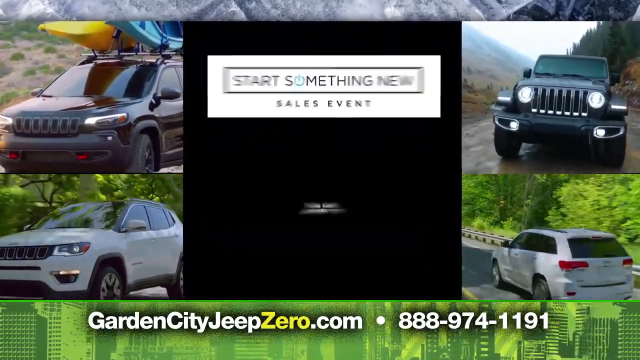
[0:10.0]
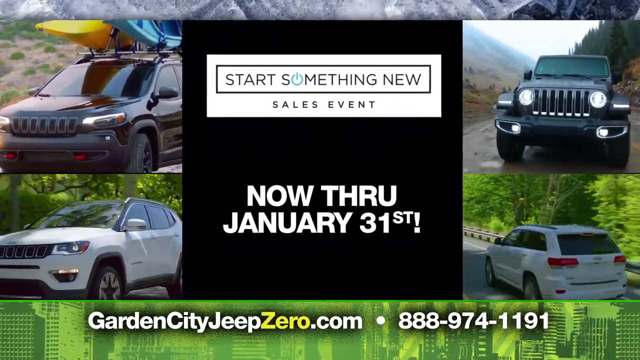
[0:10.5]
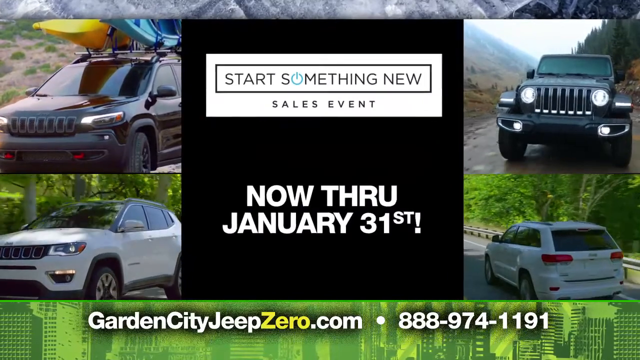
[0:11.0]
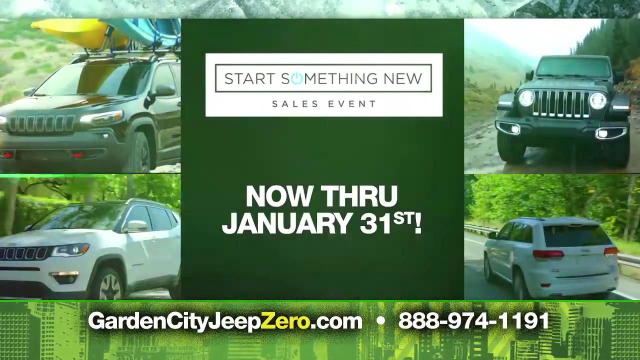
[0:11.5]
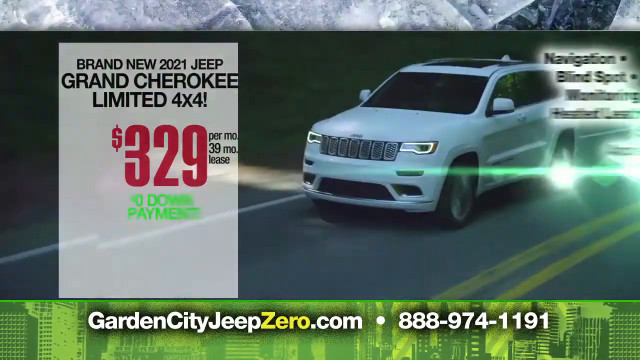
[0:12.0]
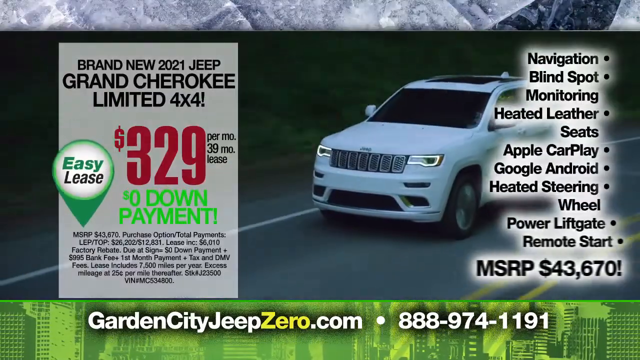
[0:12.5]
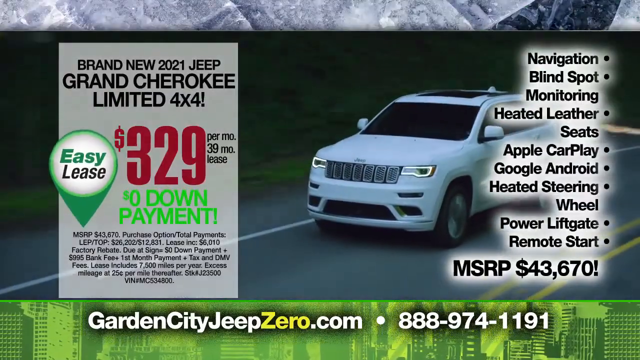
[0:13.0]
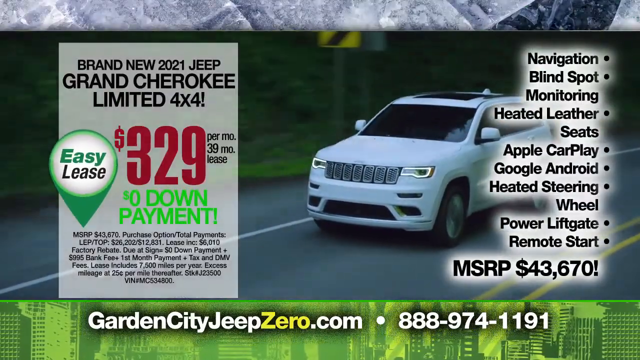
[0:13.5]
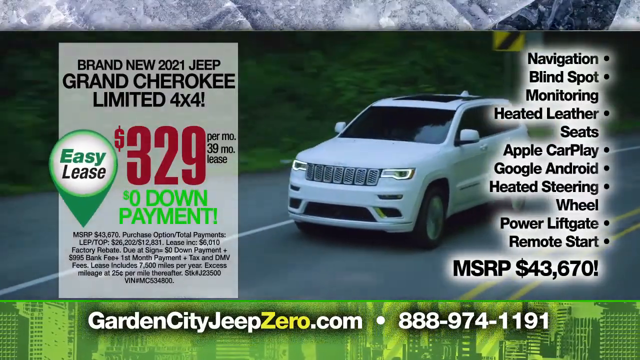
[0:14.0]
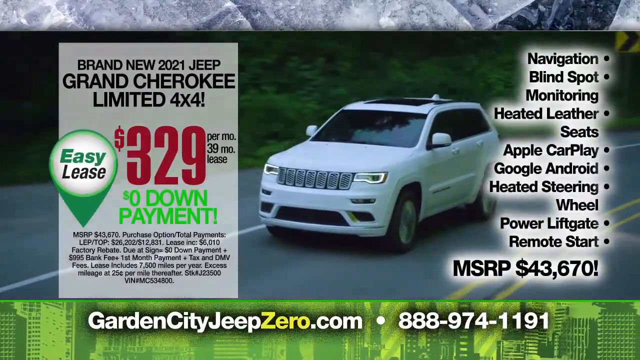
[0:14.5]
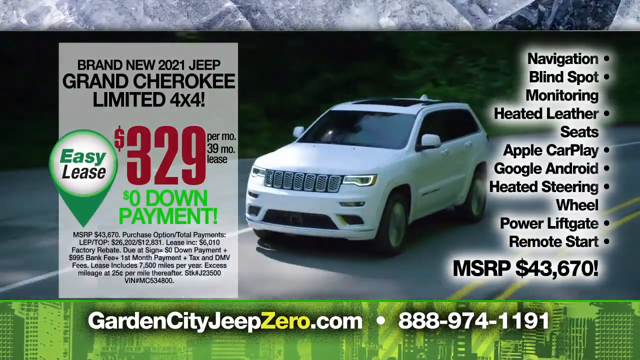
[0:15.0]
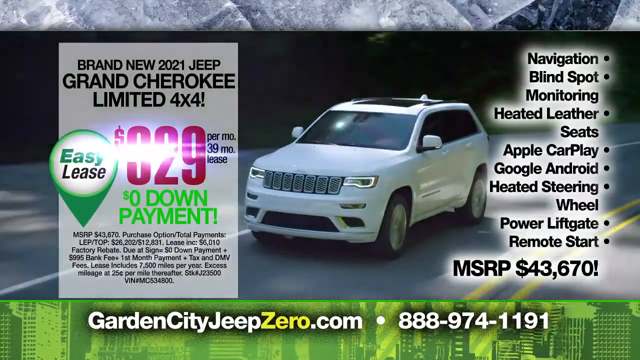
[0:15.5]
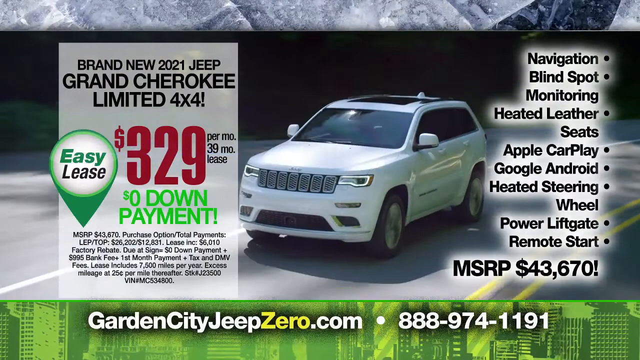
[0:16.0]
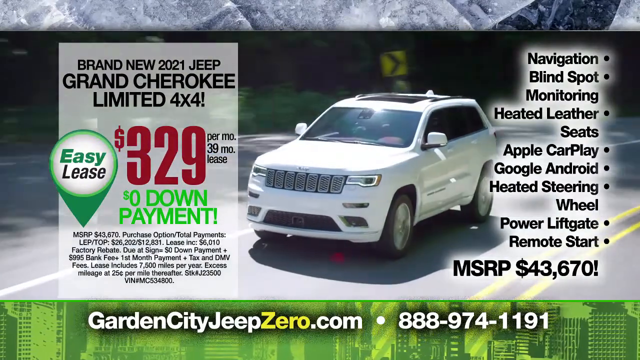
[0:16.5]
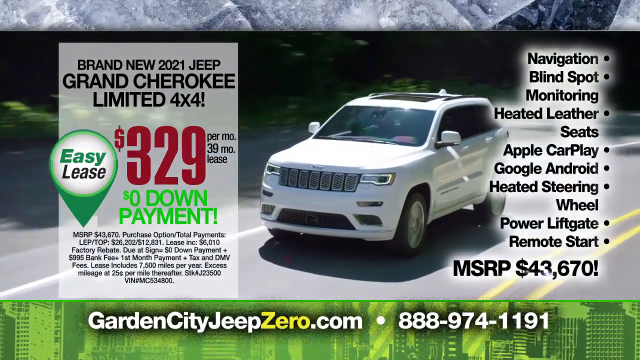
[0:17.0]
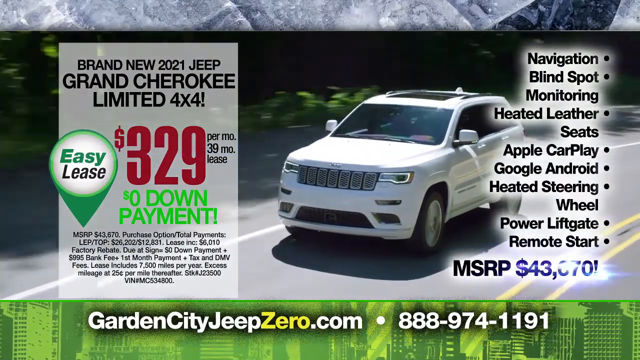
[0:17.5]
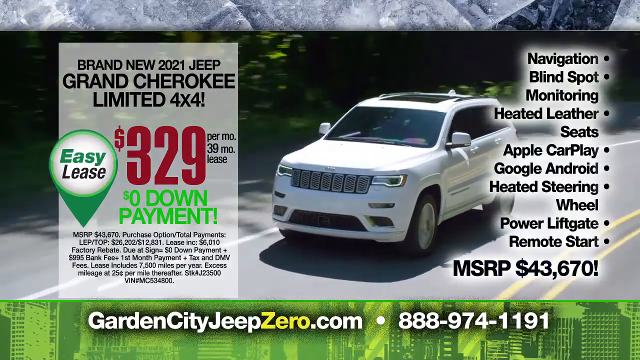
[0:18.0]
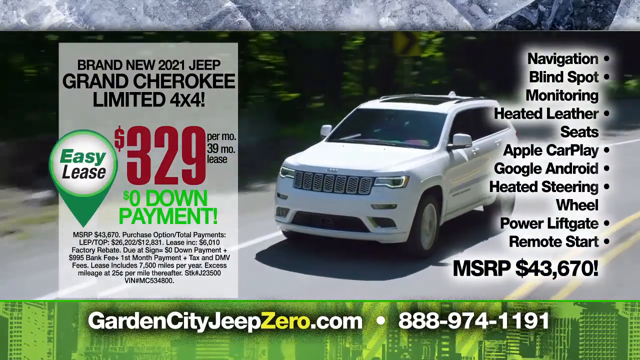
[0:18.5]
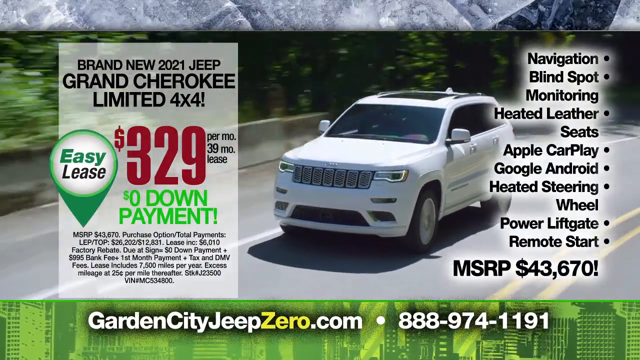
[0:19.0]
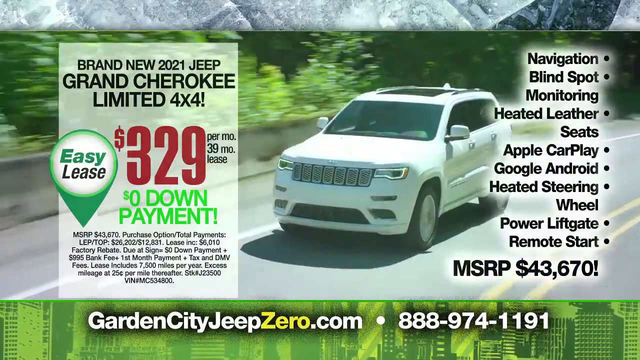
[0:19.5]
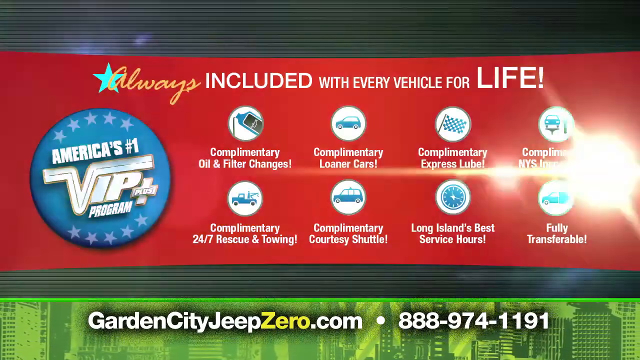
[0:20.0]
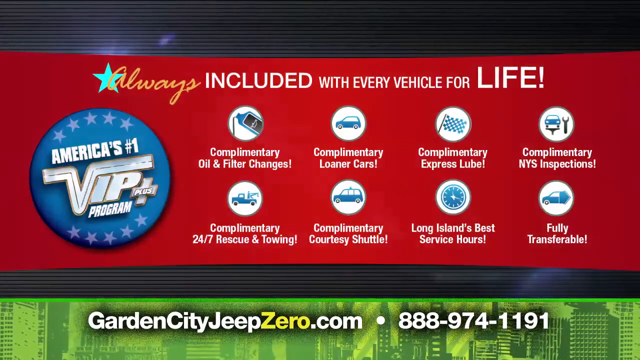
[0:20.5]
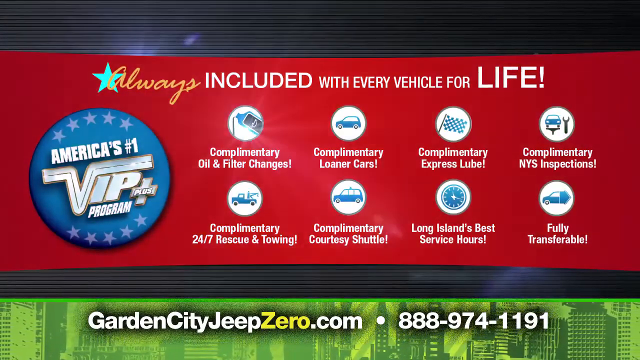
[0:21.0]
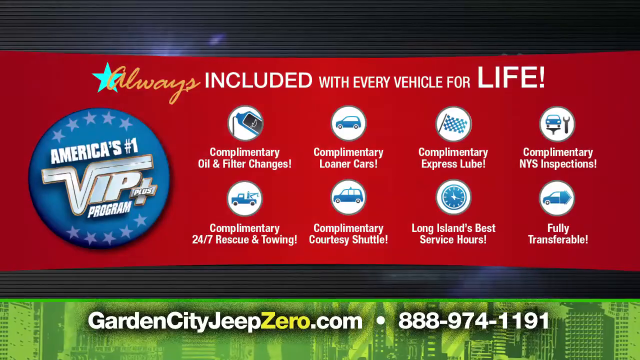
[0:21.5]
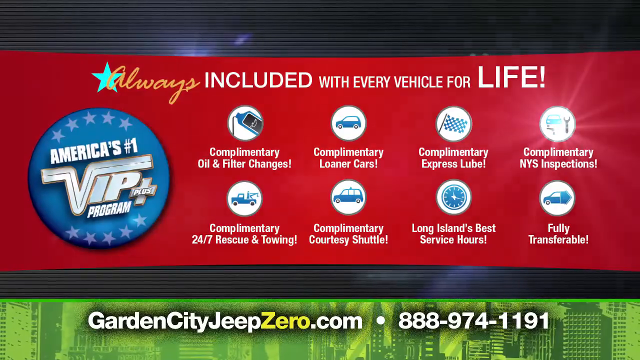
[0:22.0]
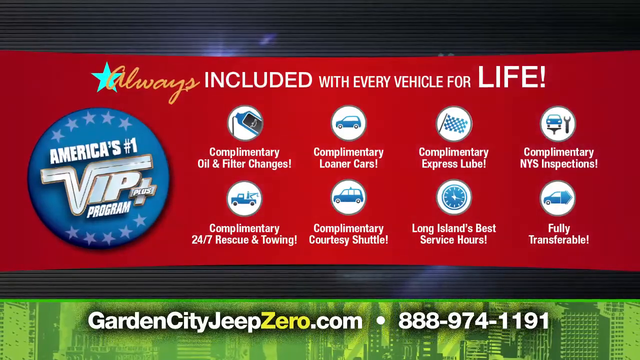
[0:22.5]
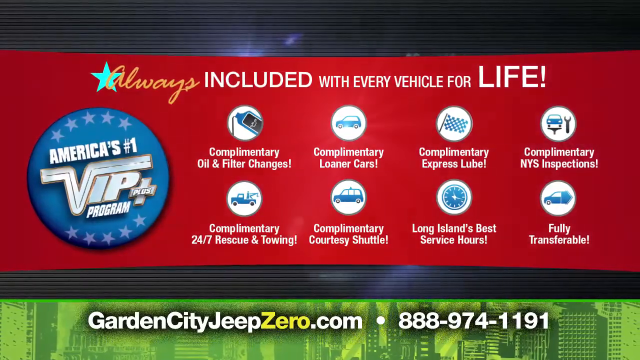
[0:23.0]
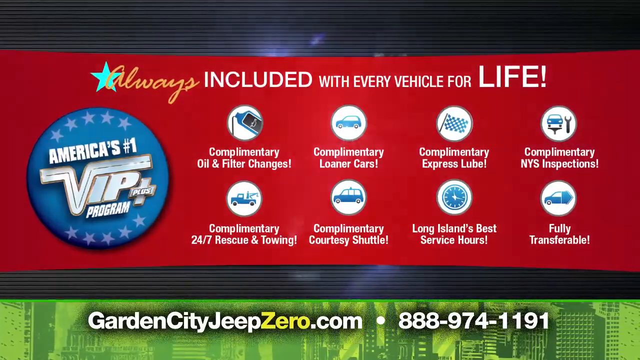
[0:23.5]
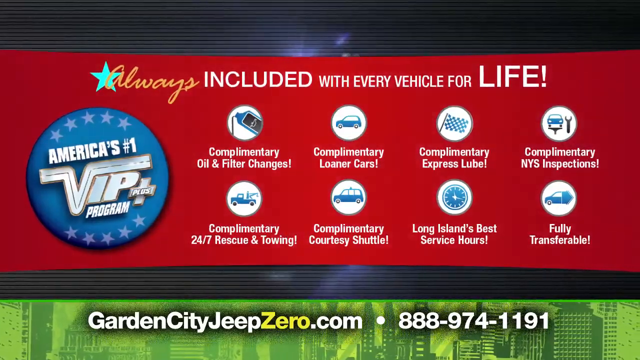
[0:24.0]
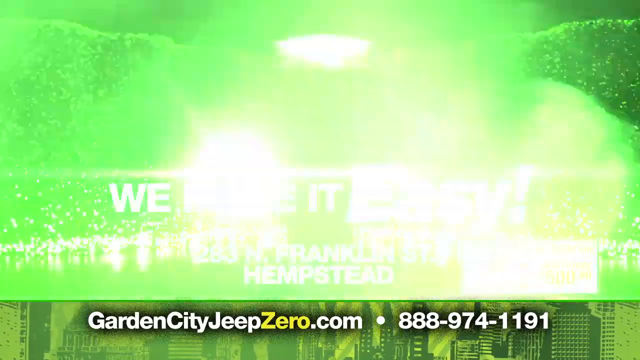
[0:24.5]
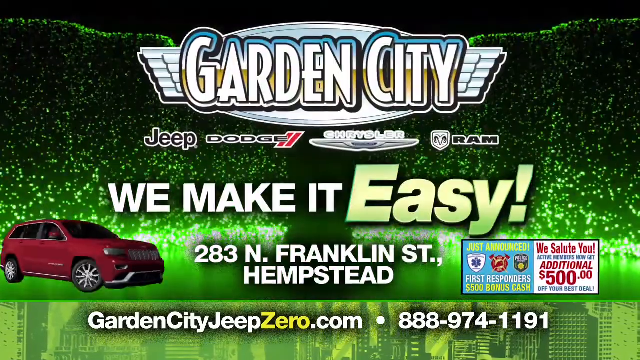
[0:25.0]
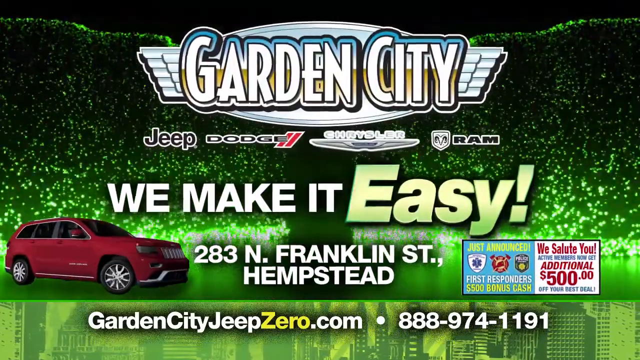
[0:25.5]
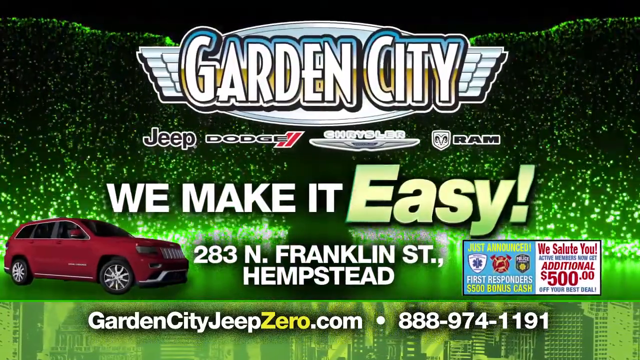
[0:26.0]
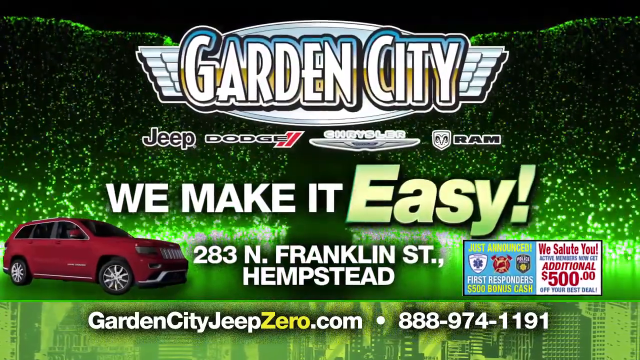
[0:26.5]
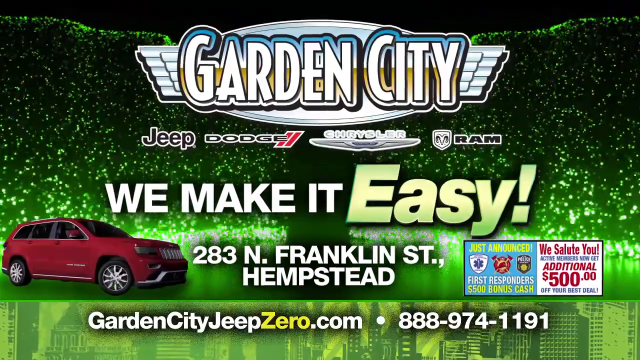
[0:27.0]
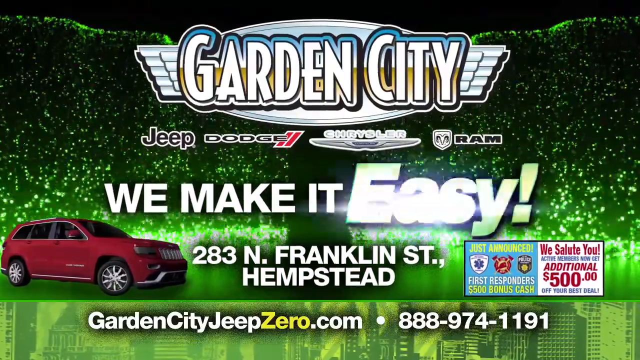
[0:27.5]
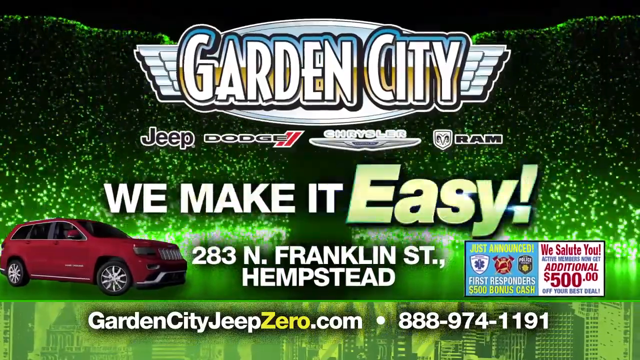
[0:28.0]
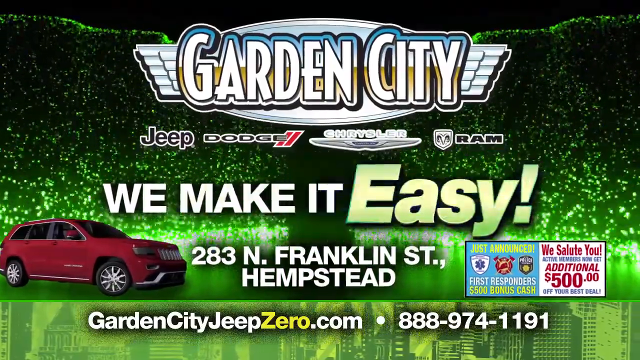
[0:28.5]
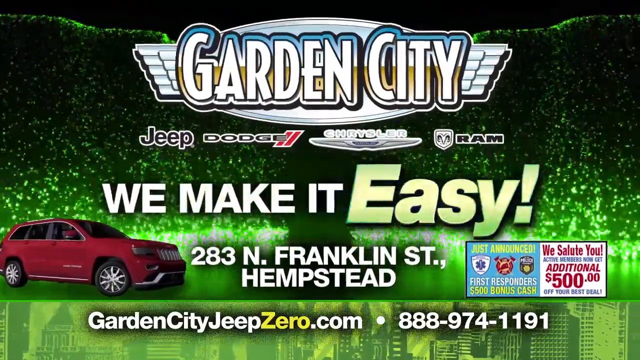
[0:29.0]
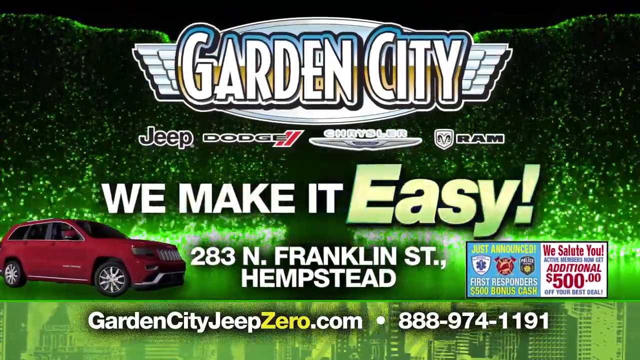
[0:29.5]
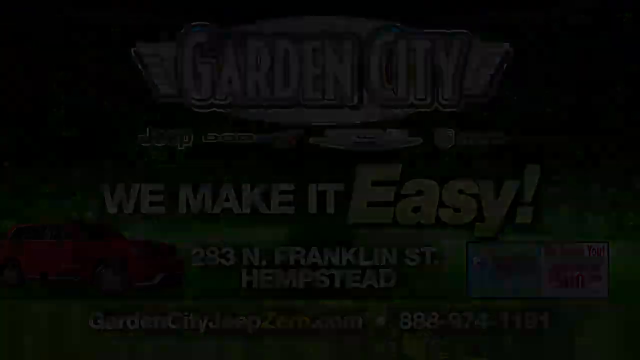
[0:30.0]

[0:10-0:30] An advertisement for a Jeep dealership runs "now through January 31st." A Jeep Grand Cherokee drives down the road while its particulars and price are shown: it is brand new, a 2021, for $329, 0% down. Text reads "easy lease," and then a red band appears across the screen reading "America's number one VIP program, always included with every vehicle for life," followed by what is included, such as a complimentary oil change service. Next, "Garden City" appears at the top along with "Jeep Dodge Ram" and apparently Chrysler, with the words "we make it easy"; "easy" is written in very large letters. An address is given, a red Jeep is shown, and a phone number appears, along with a small additional $500 ad like a pop-up in the lower right-hand corner. Then a page reads "start something new," and as a white Jeep drives down the road, bullet points list what is included in that Jeep.